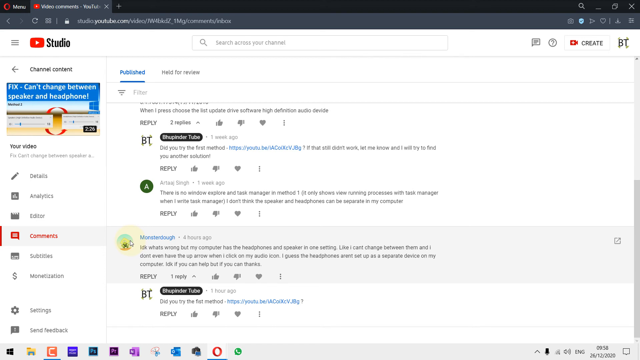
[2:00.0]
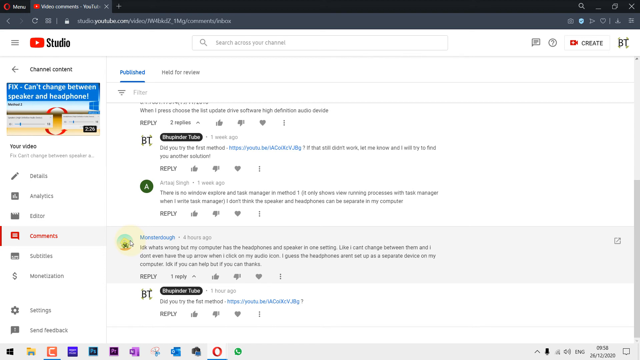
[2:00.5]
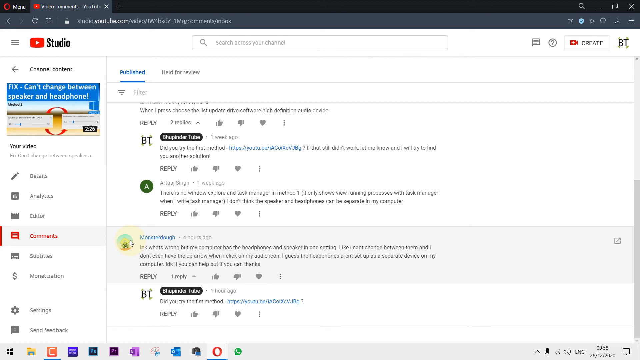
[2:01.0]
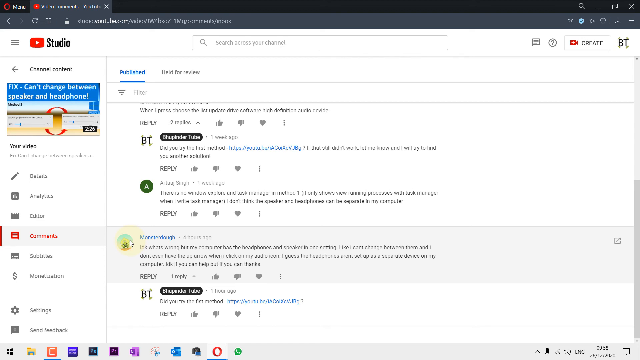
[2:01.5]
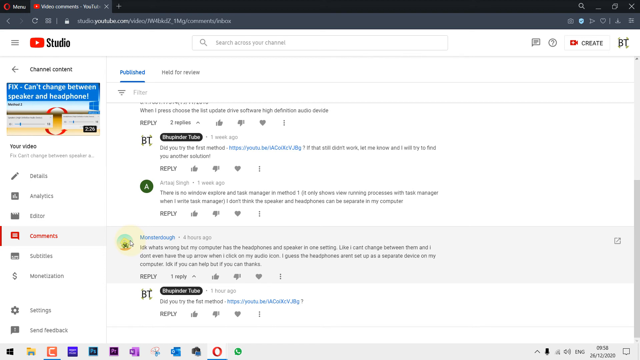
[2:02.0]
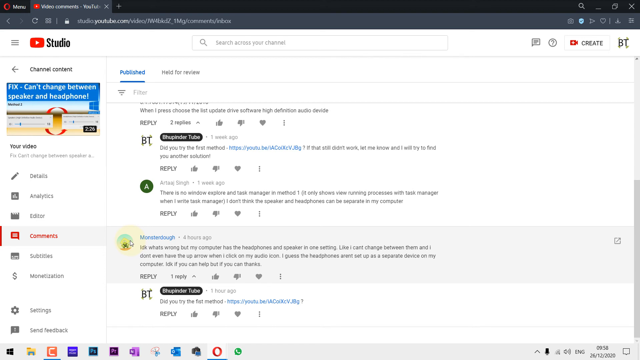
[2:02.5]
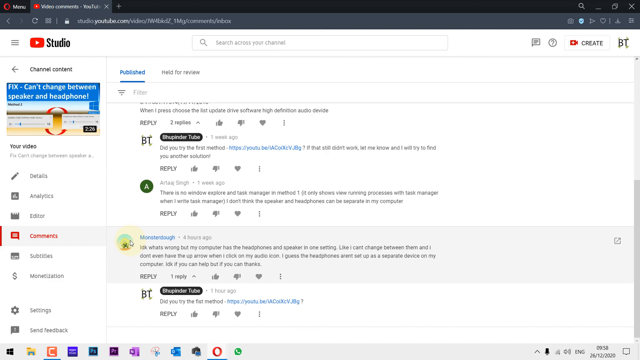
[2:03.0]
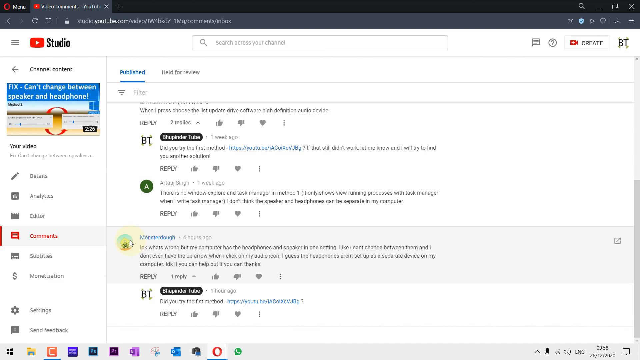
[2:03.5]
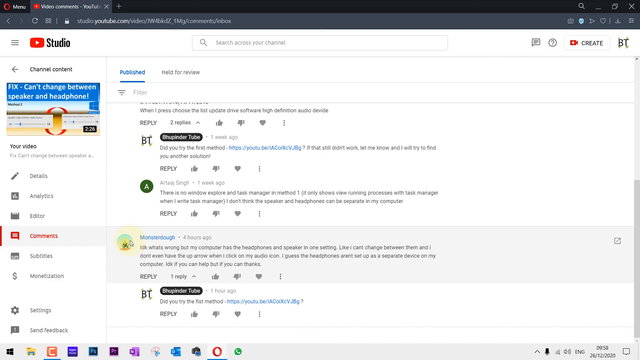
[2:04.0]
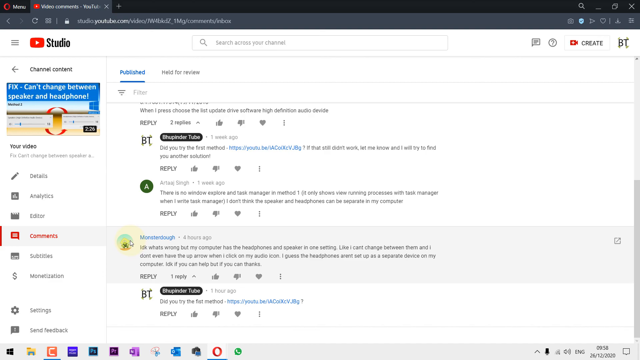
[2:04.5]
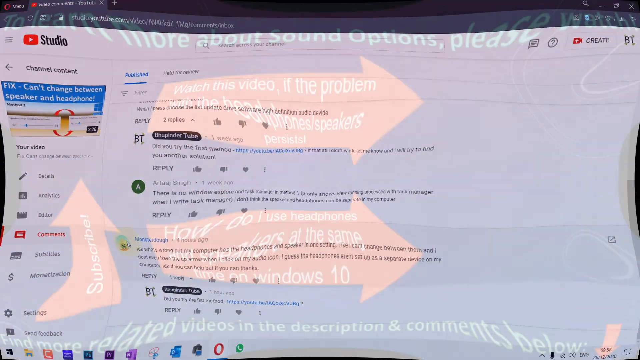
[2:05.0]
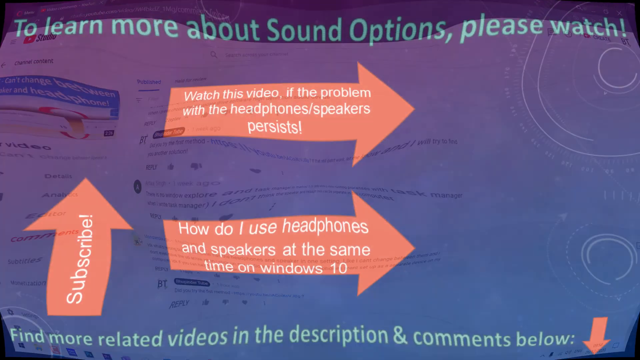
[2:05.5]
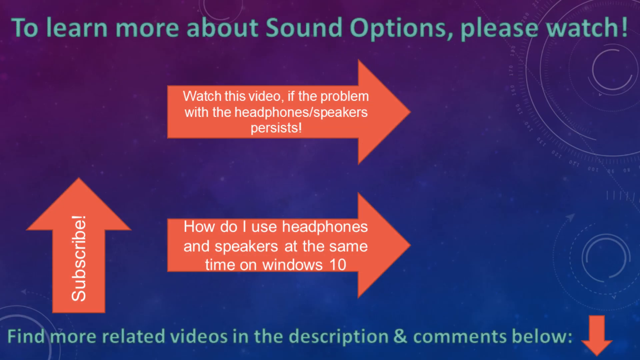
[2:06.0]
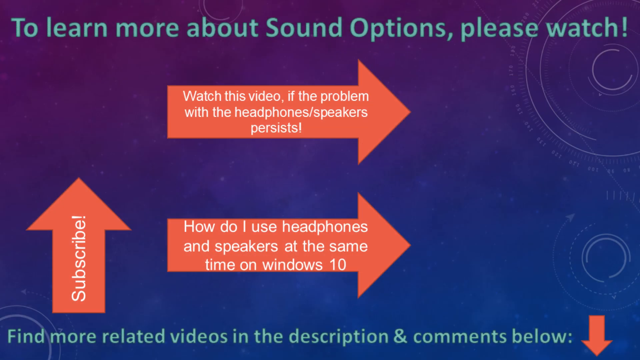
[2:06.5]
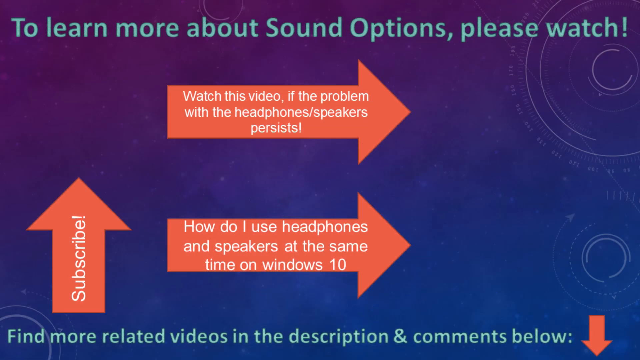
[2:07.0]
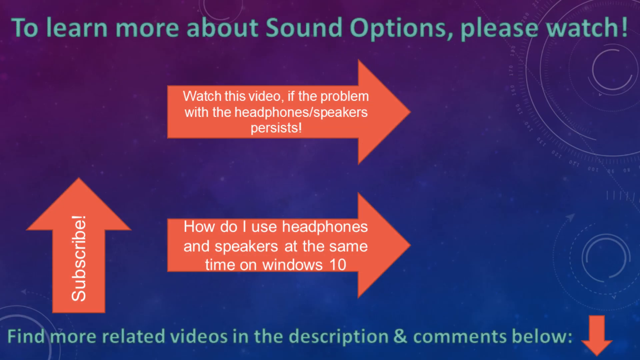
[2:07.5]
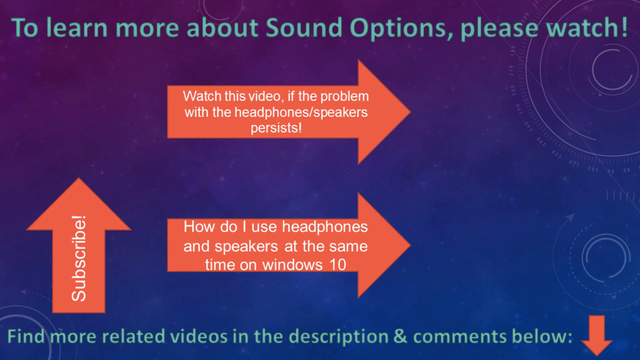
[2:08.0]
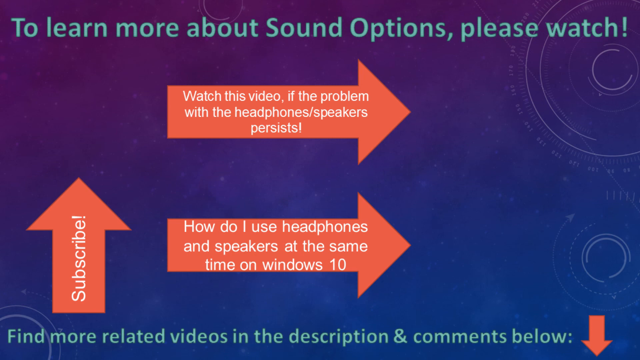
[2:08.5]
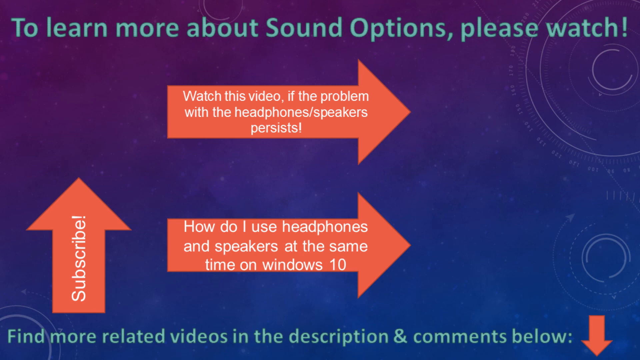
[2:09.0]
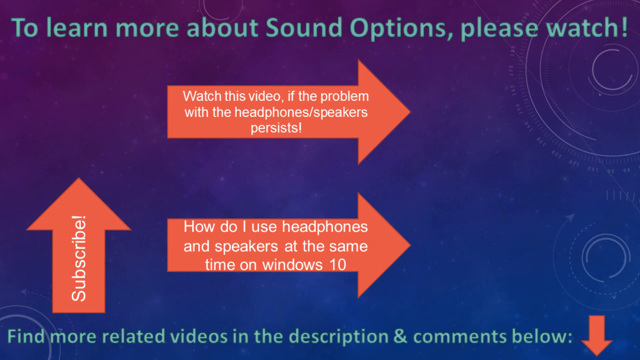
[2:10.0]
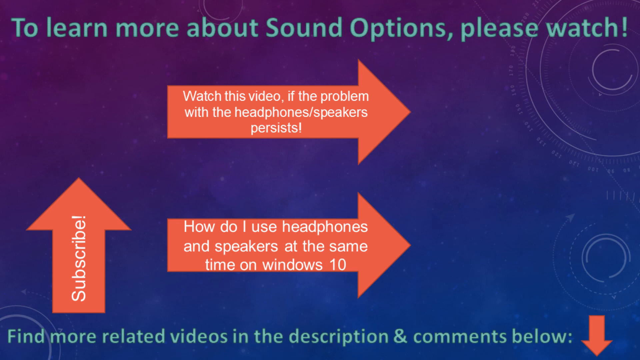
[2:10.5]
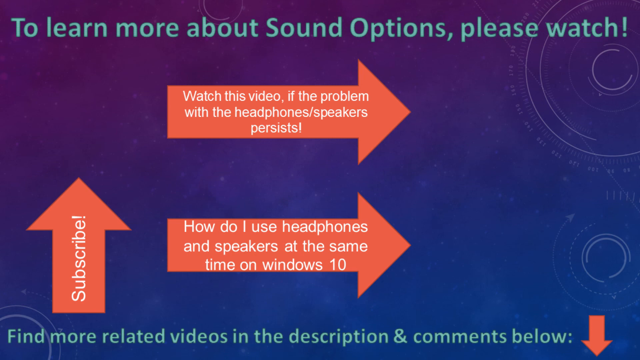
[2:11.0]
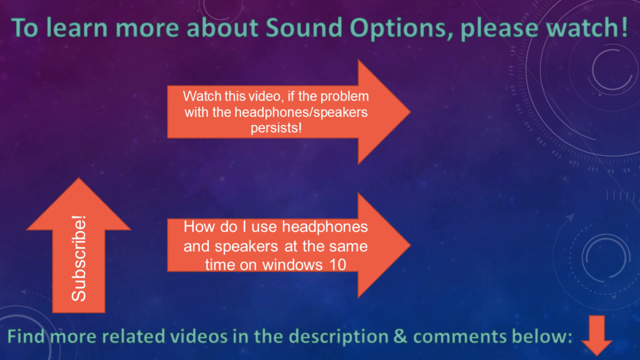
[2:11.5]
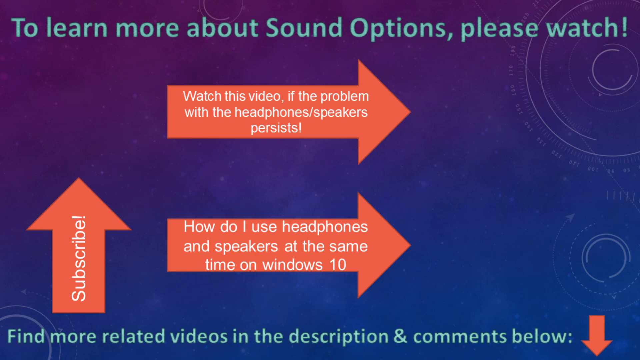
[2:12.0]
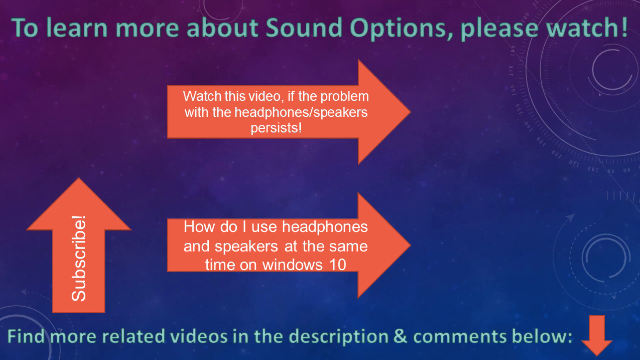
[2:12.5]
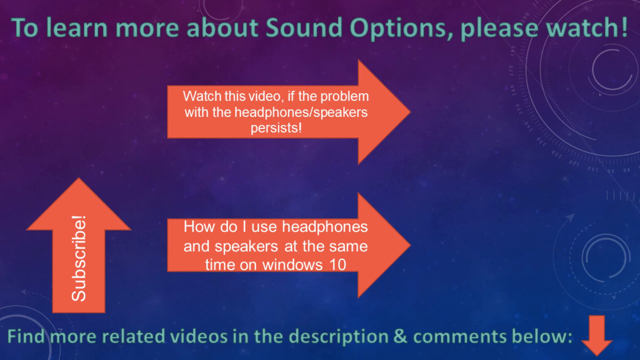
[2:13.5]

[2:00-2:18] The YouTube Studio comments page is shown, with the YouTube logo and "studio" written on the side. "Published" is highlighted in blue while other text is in black, on a white background. There is a green letter A in a circle, and in the right corner there seems to be a picture with the text "fixed change between them". The comment option is written in red while the others are in black. The video then goes to a page with a blue background and circle designs in the top right and bottom left corners, reading "to learn more about sound options, please watch!" with an exclamation mark at the end. "Subscribe" is written on an arrow facing up. Two more arrows both face right: the top one reads "watch this video if the problem with the headphones or speakers persist", and the one underneath reads "how do I use headphones and speakers at the same time on Windows 10".